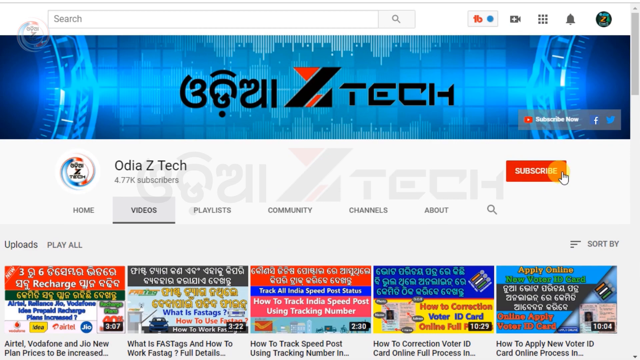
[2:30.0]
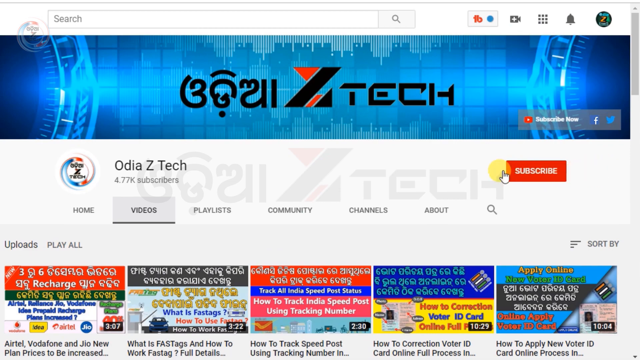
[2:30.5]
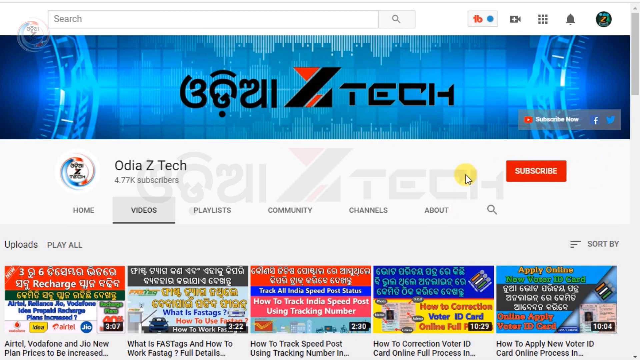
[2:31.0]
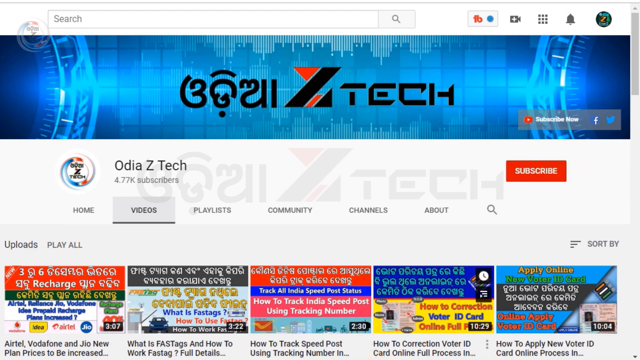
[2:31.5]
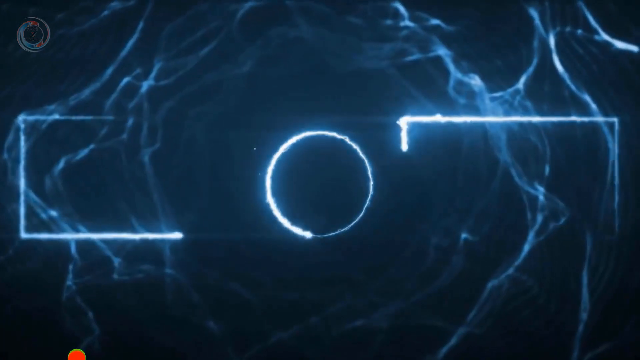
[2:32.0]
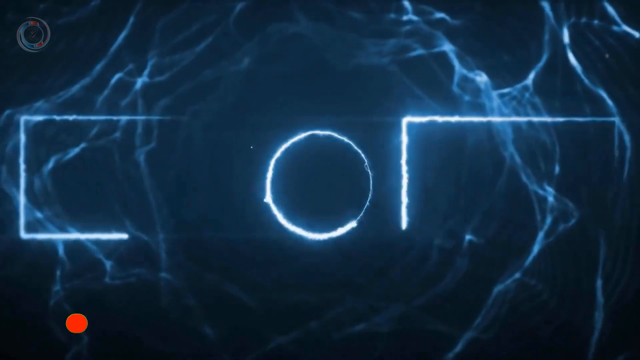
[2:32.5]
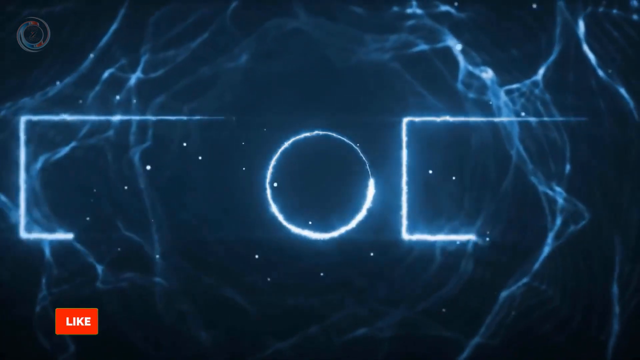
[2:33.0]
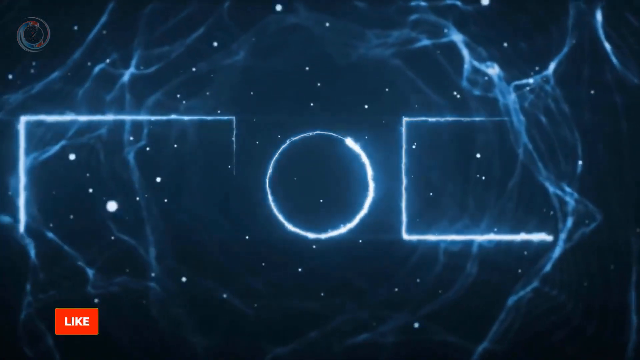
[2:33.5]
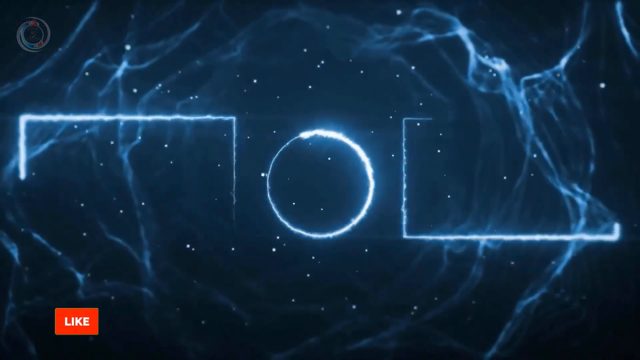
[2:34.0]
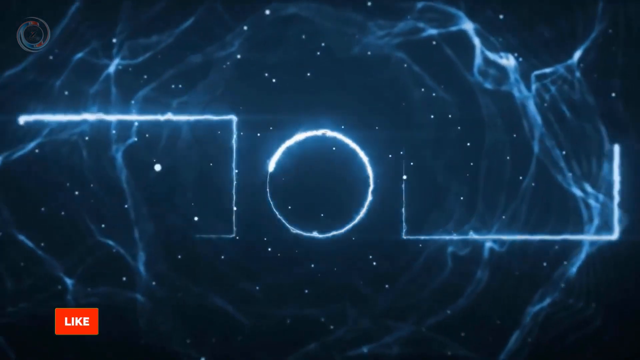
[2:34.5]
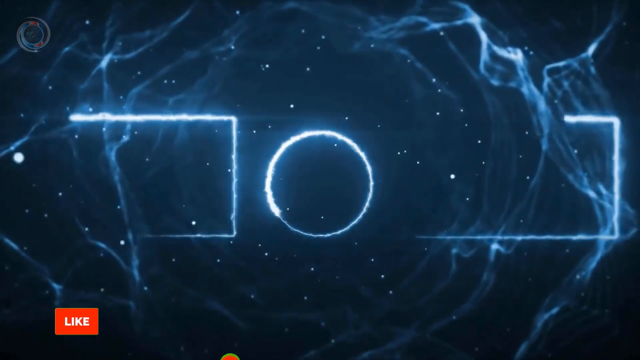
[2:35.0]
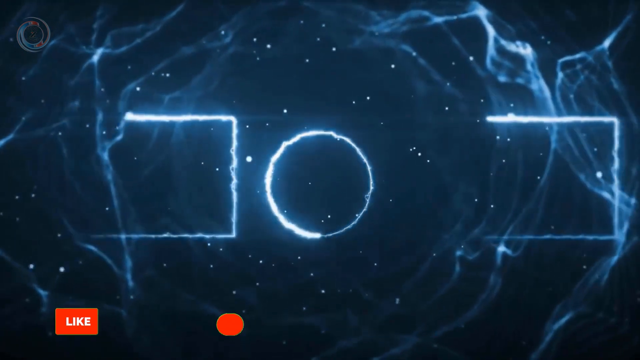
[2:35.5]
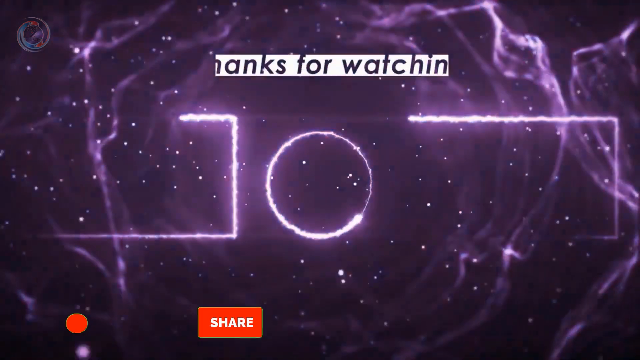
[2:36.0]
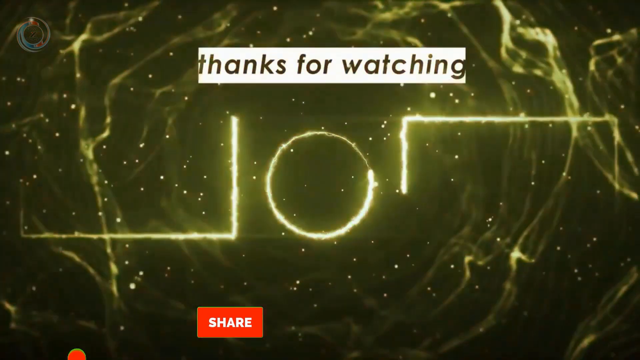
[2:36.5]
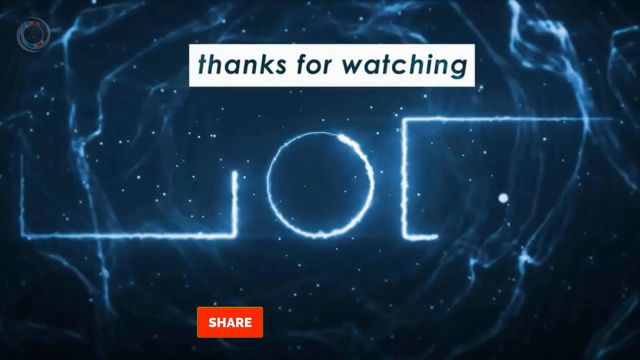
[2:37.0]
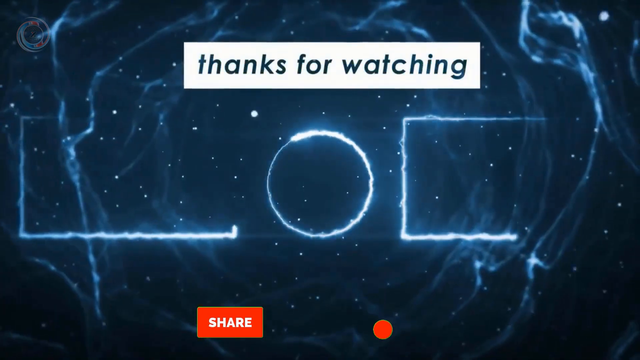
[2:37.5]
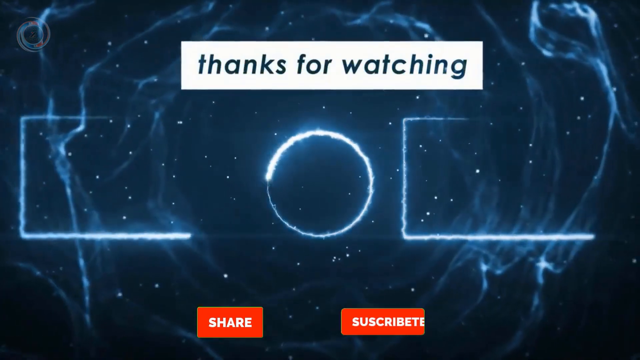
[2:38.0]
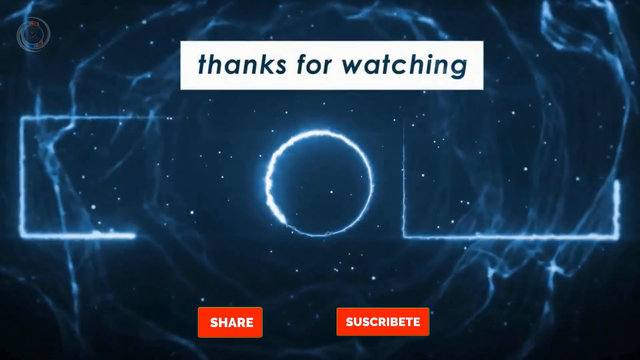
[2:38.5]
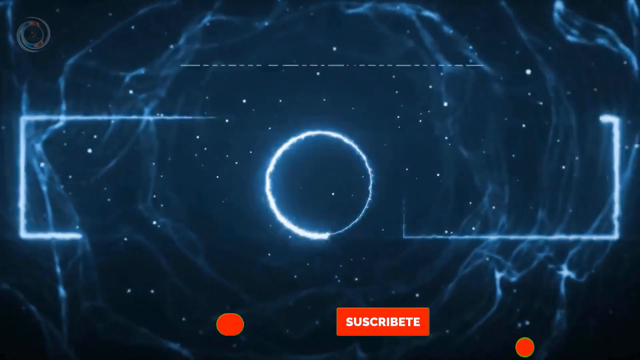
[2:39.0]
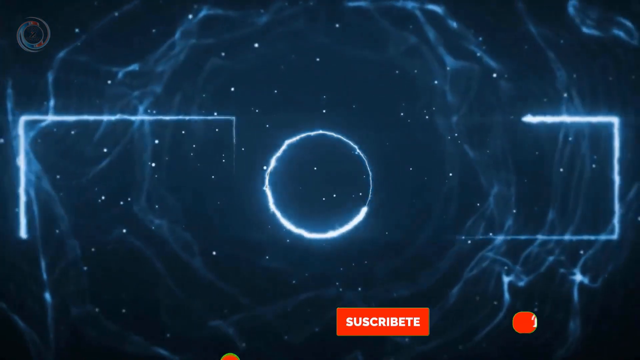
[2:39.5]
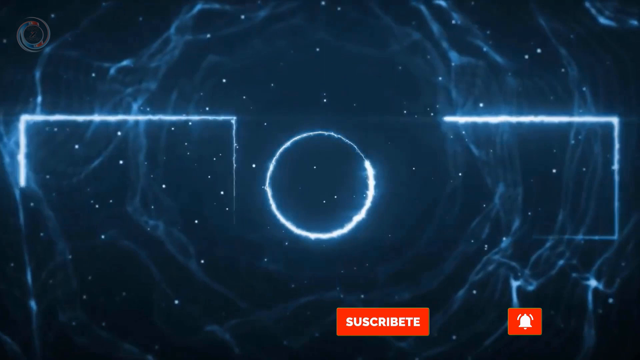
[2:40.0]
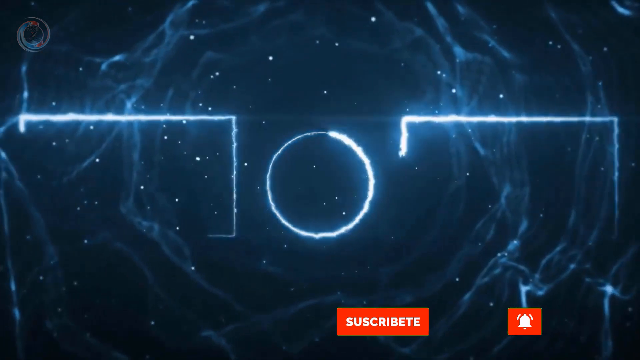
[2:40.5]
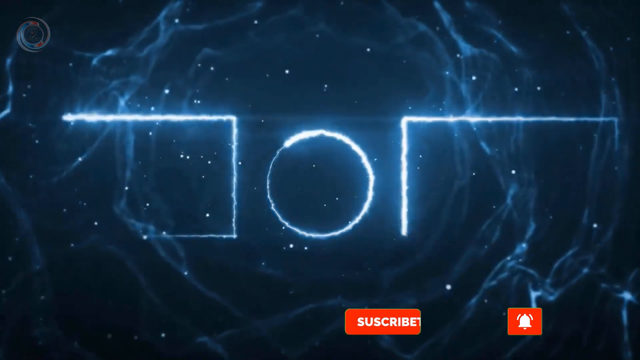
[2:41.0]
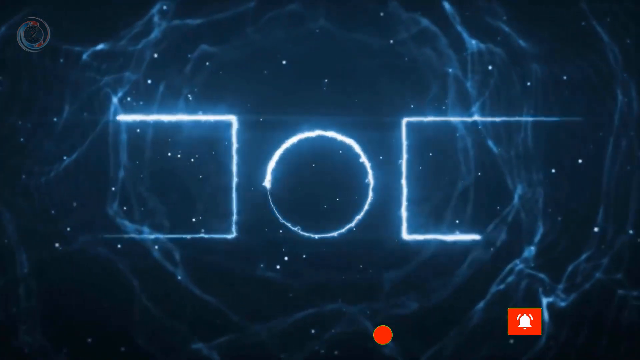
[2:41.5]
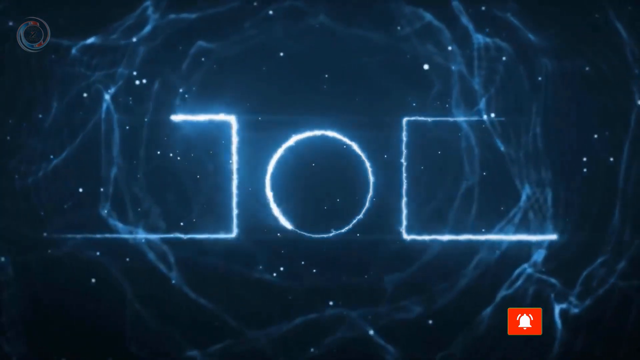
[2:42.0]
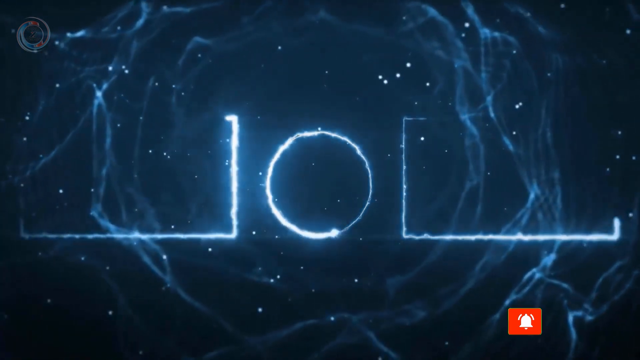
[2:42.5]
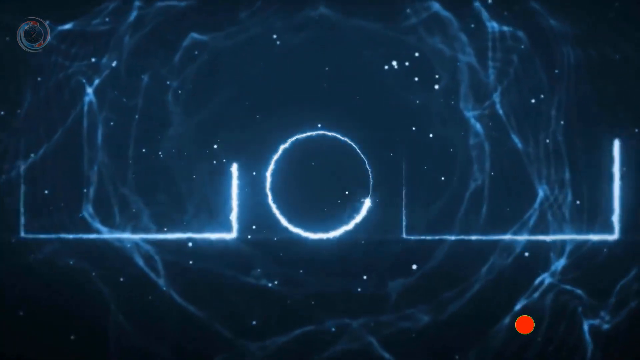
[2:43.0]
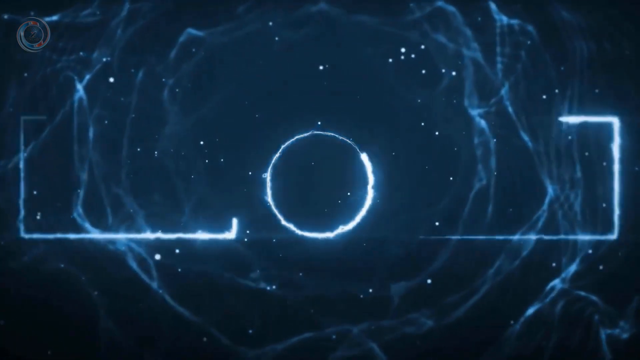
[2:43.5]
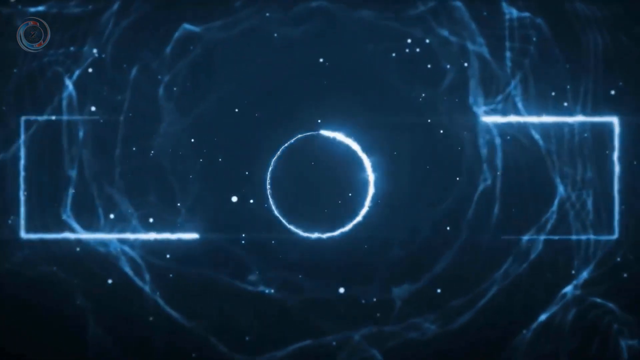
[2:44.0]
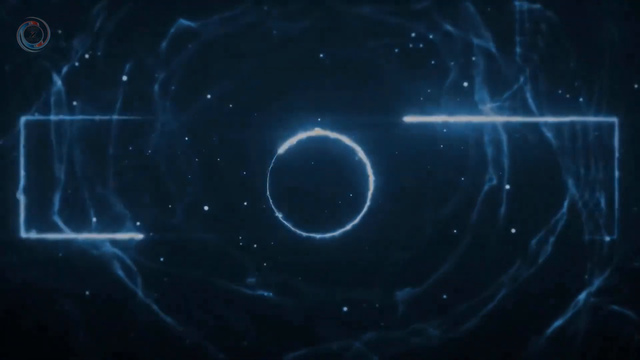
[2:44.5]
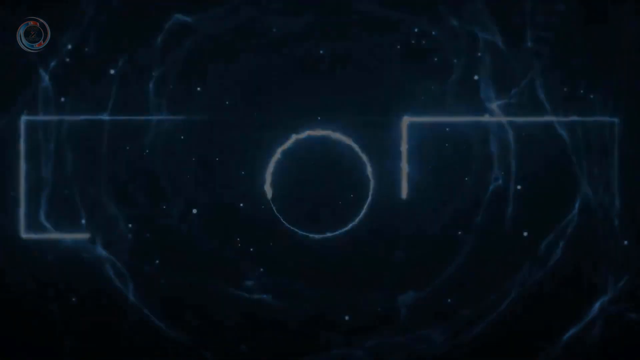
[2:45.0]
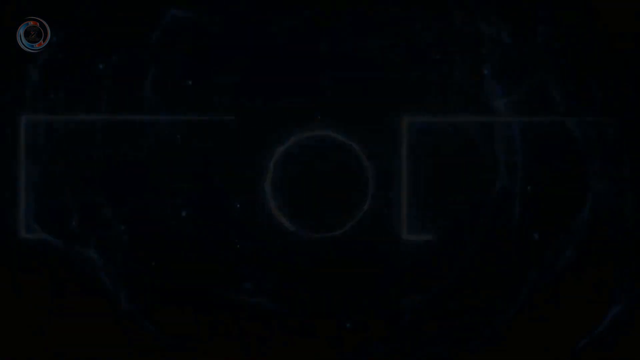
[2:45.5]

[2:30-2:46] A stylized ending plays: two blocks come in and form from the left and the right, turning counterclockwise and clockwise, faintly changing colors from light blue to green and from very light bluish green to red, with a fiery look. In the center, a circle follows a similar path in alternating colors, and above it a "thanks for watching" sign pops up. The background is black with blue lightning-like streaks moving forward, also changing color. For a couple of seconds, a like button and a share button pop up, and finally a subscribe button and a notification bell appear.